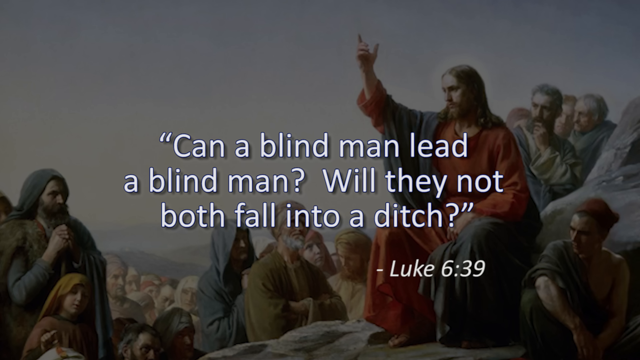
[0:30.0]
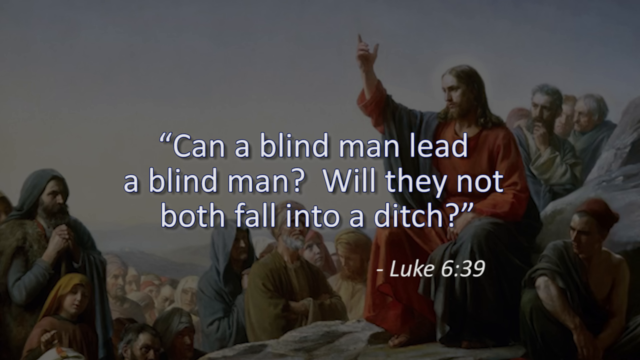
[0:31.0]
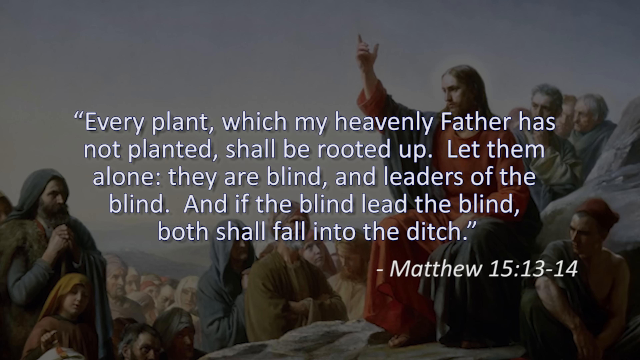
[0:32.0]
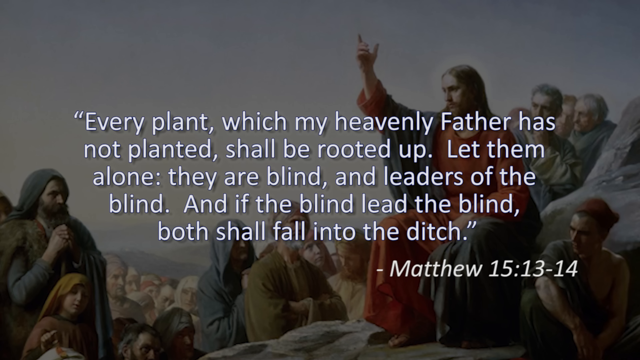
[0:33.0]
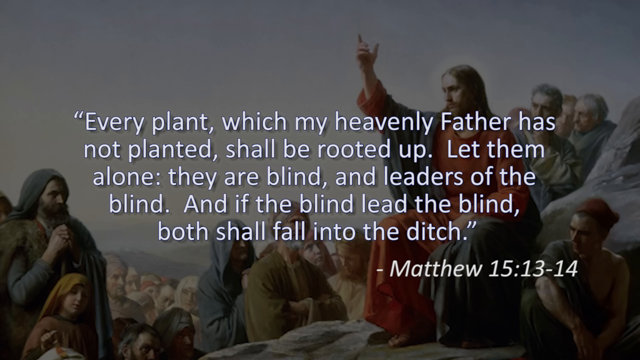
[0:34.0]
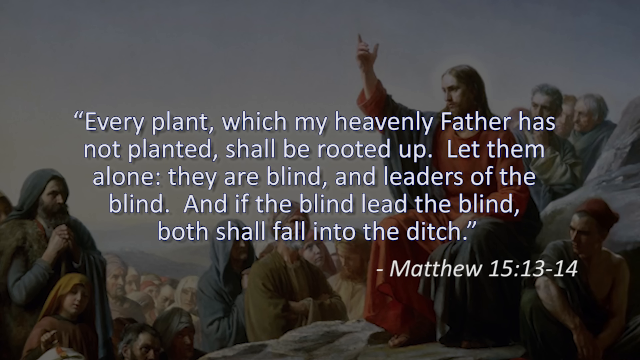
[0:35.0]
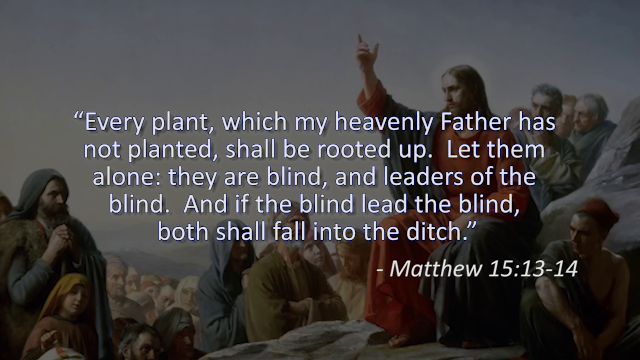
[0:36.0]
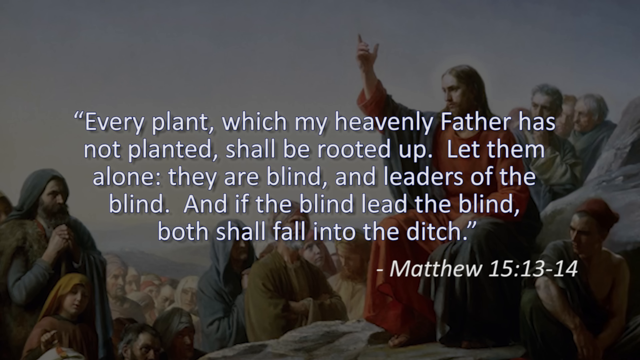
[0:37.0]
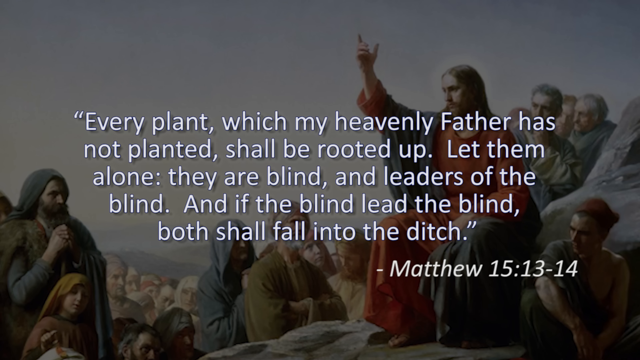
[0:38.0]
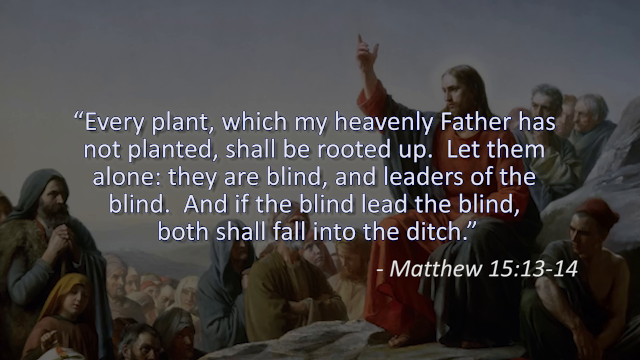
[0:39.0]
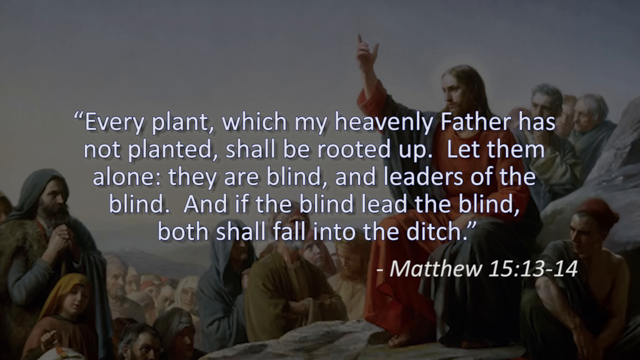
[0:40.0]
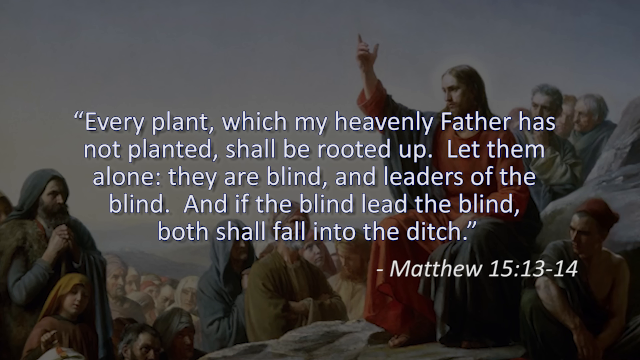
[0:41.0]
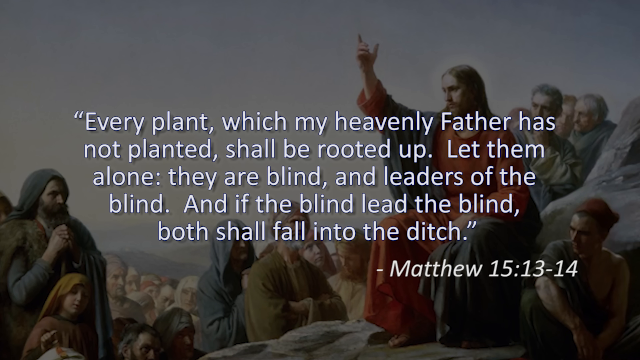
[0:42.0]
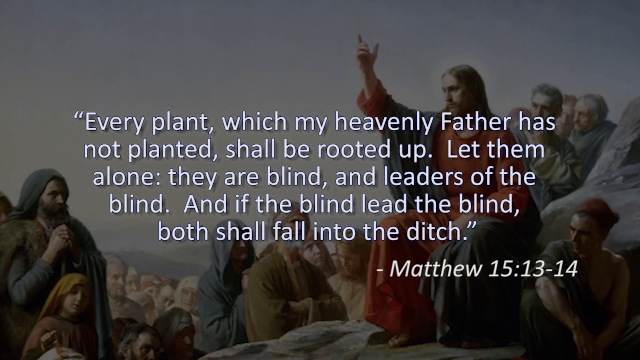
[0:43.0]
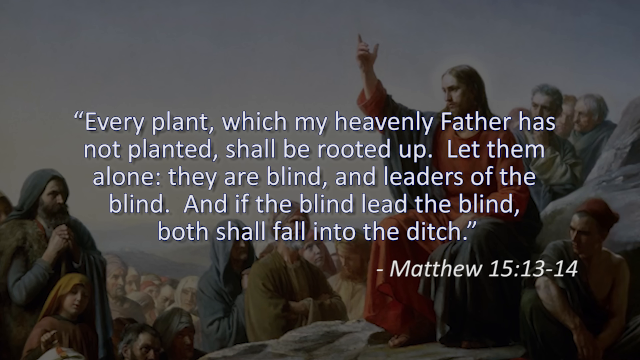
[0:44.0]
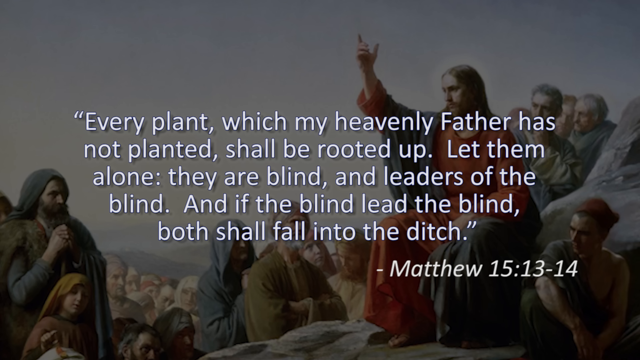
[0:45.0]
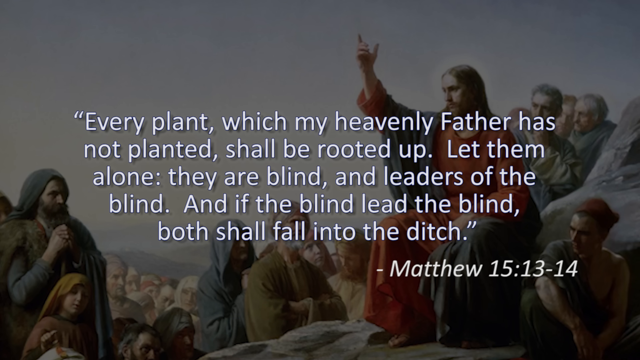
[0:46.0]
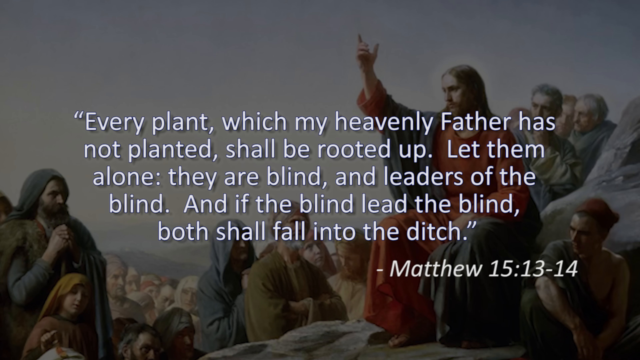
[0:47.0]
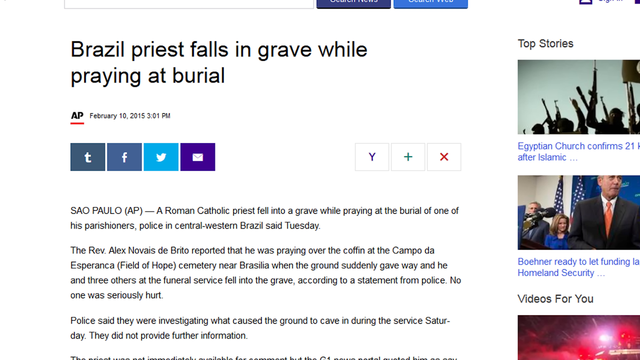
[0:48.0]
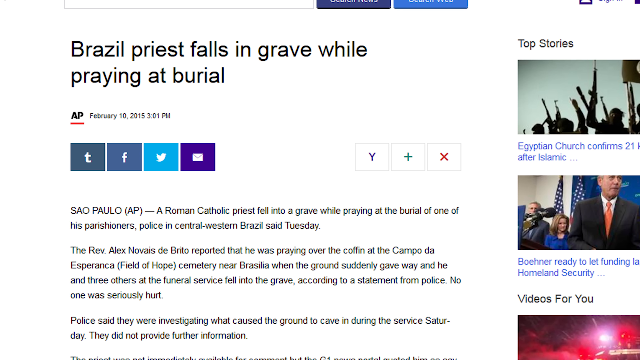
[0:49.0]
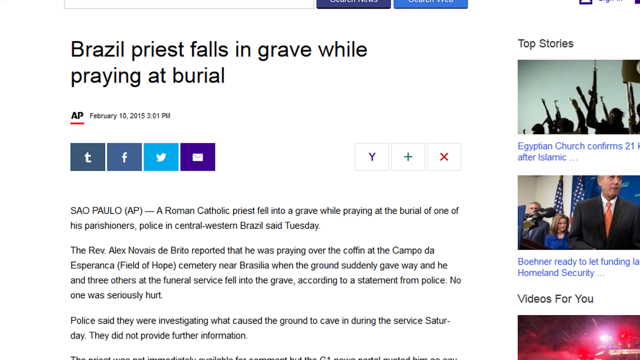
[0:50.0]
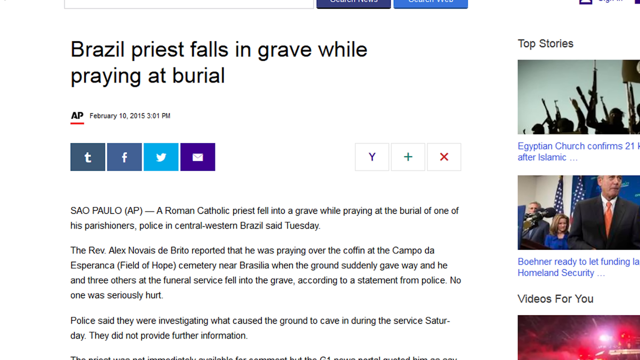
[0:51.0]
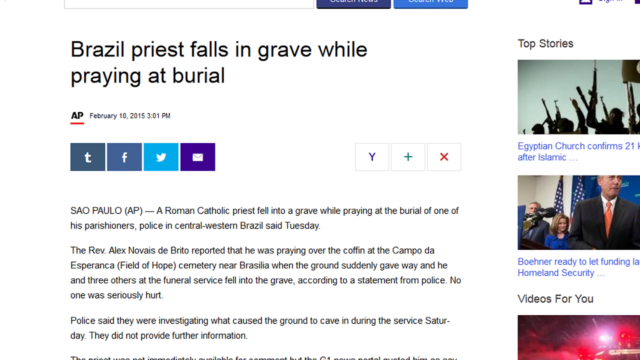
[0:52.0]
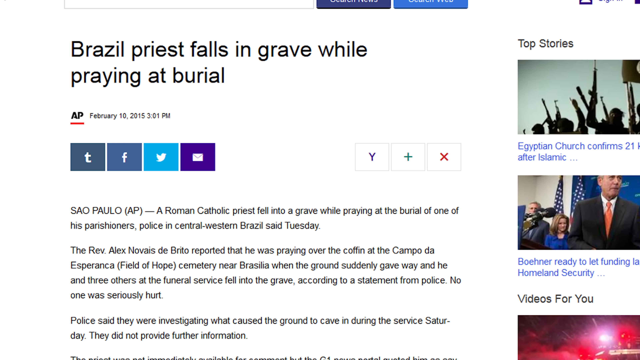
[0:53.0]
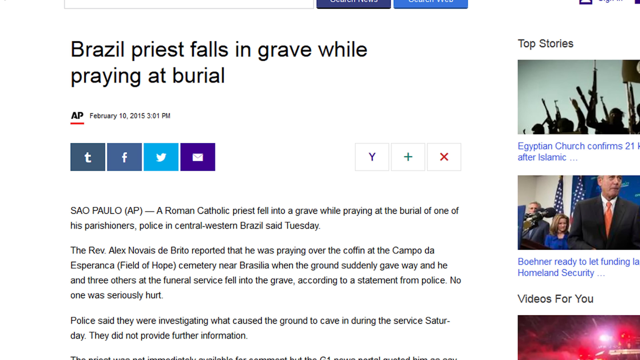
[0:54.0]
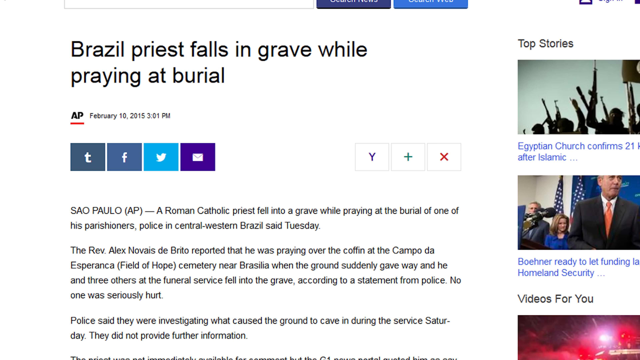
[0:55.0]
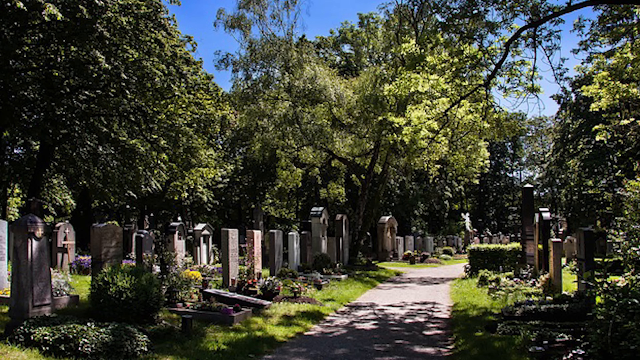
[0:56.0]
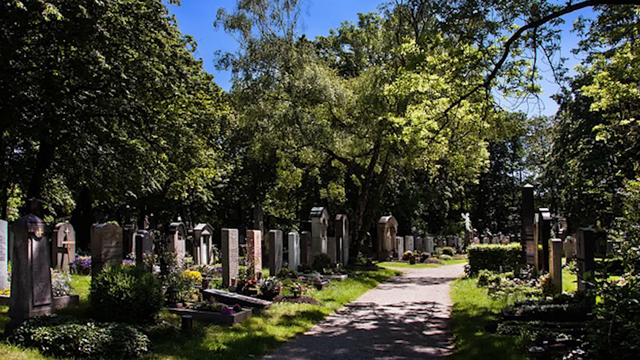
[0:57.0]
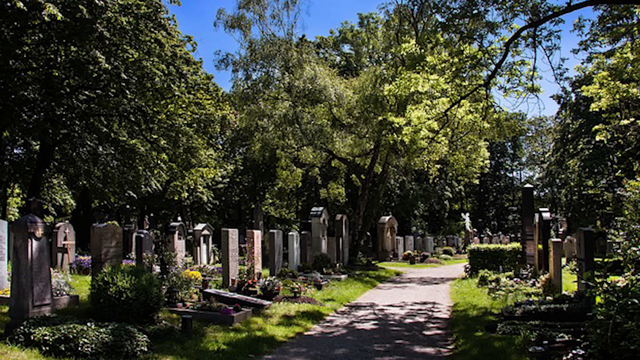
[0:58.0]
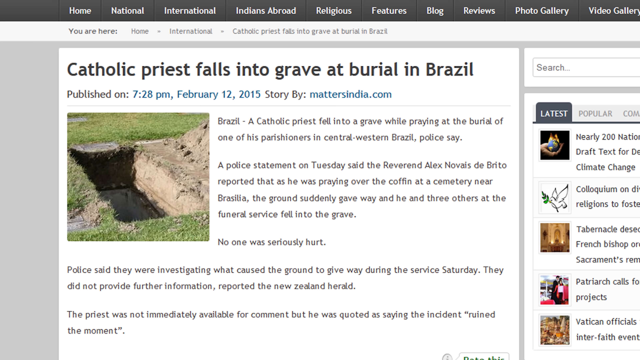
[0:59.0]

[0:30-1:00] A picture of Jesus sitting on a rock, which looks like a painting, fills the scene. He wears a red robe that goes all the way down to the ground, with a gray blanket going over his right shoulder, down around his back and over his left leg. Behind them are people also wearing robes, and sitting on the ground in front of him to his right are men with their heads covered, also wearing robes. Across the middle of the screen, in white, is the text "can a blind man lead a blind man? Will they not both fall into a ditch", with "Luke 6 39" underneath. That text goes away and new white text appears: "every plant which my heavenly father has not planted shall be rooted up. Let them alone. They are blind and leaders of the blind and if the blind lead the blind both shall fall into the ditch", with "Matthew 15 13-14" underneath.